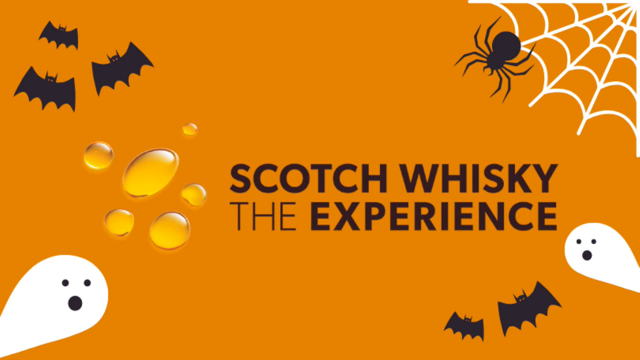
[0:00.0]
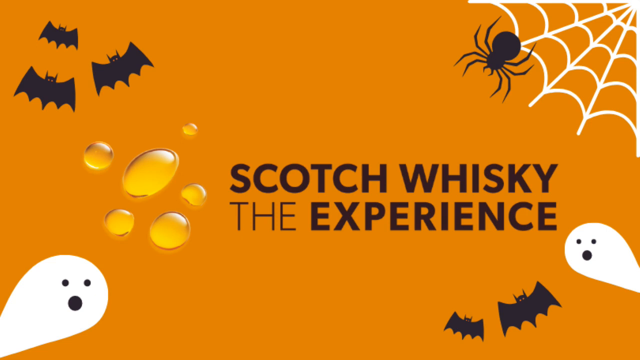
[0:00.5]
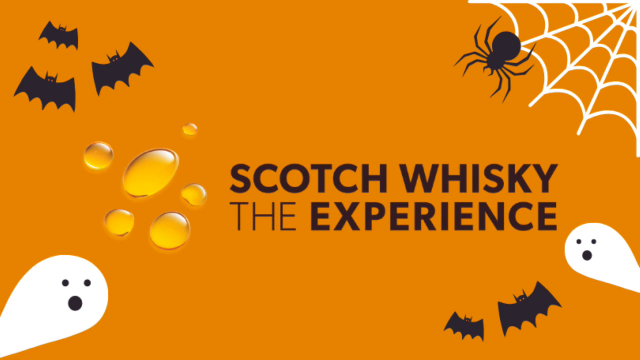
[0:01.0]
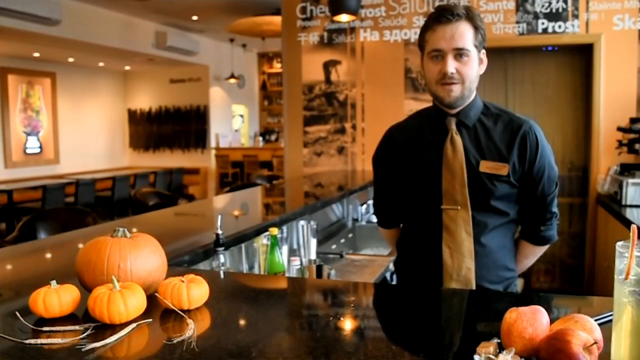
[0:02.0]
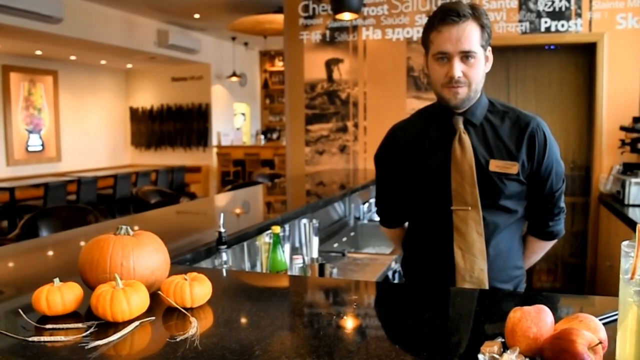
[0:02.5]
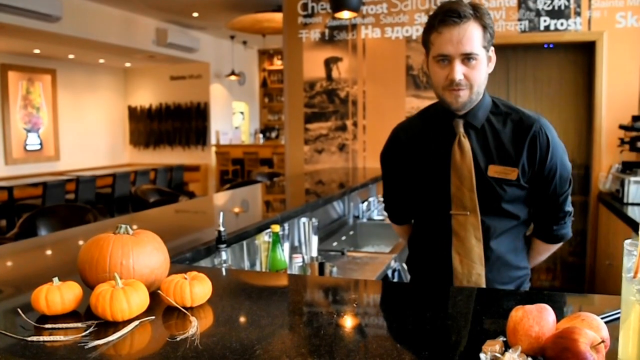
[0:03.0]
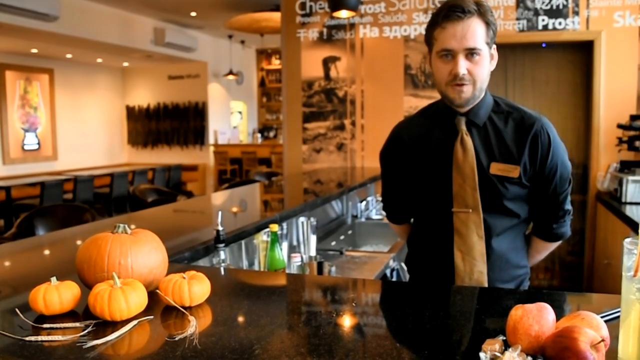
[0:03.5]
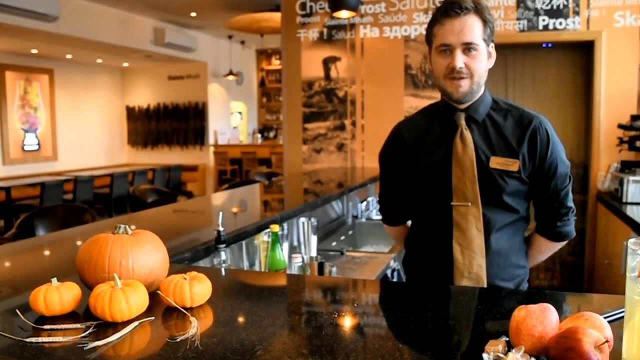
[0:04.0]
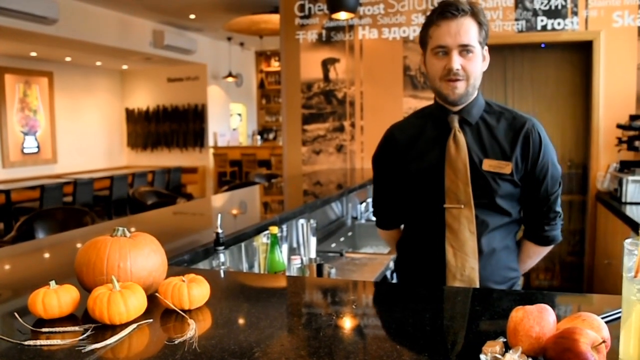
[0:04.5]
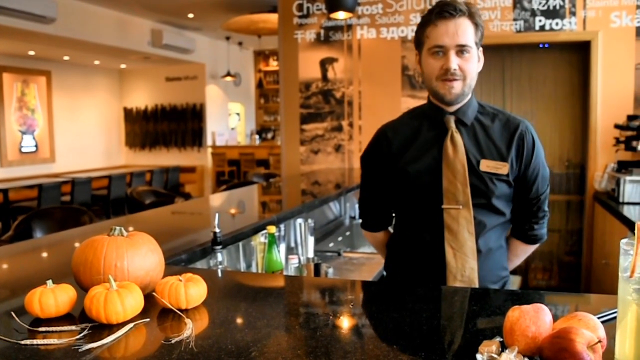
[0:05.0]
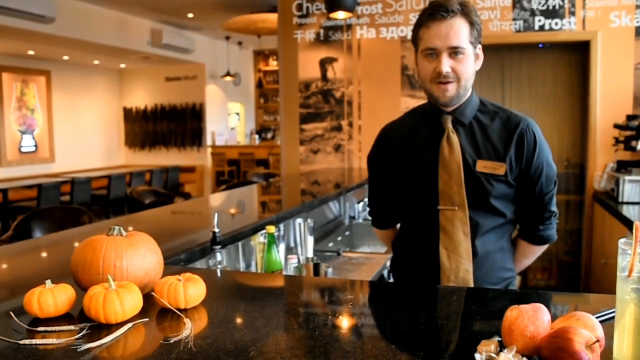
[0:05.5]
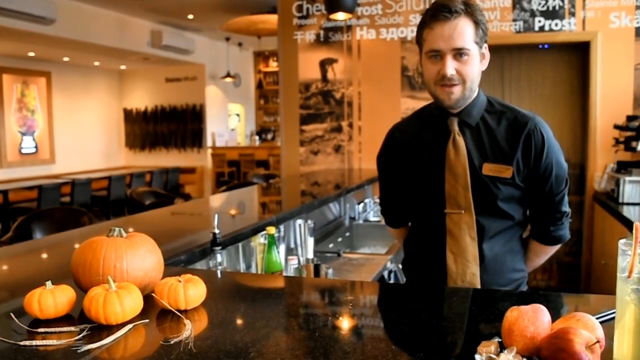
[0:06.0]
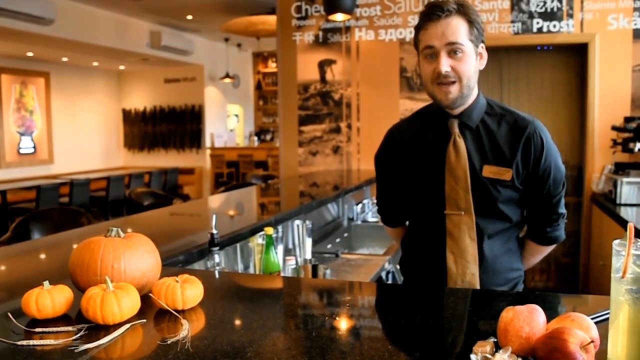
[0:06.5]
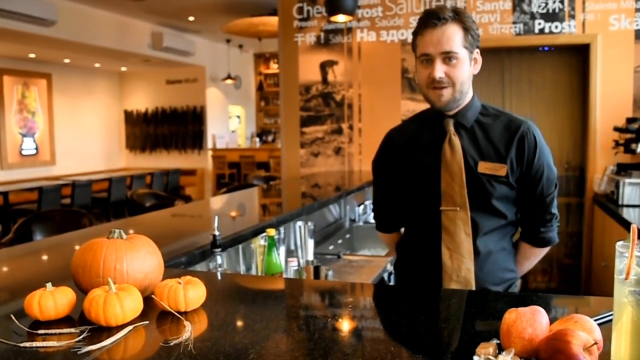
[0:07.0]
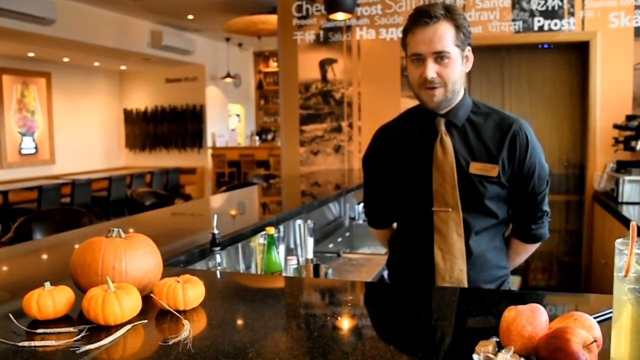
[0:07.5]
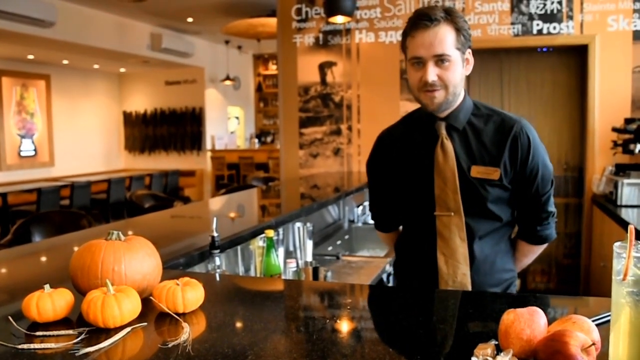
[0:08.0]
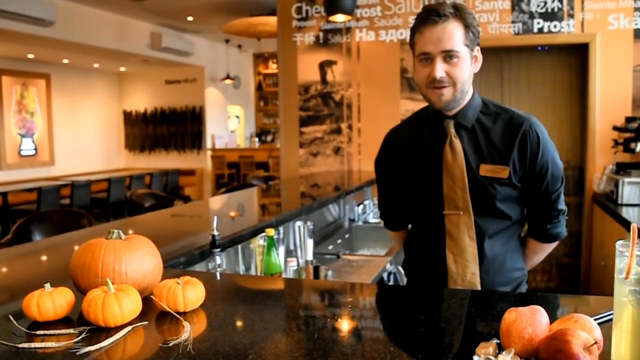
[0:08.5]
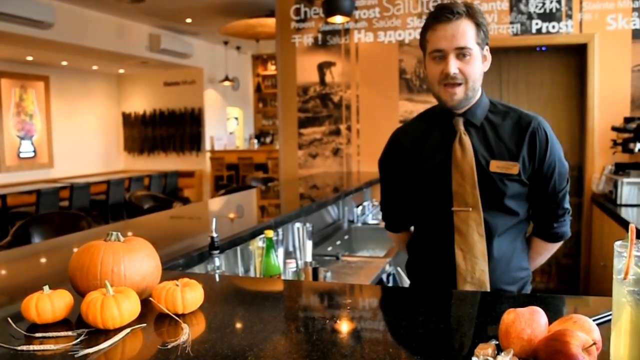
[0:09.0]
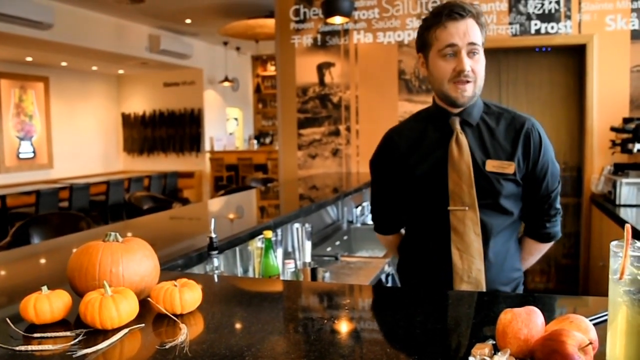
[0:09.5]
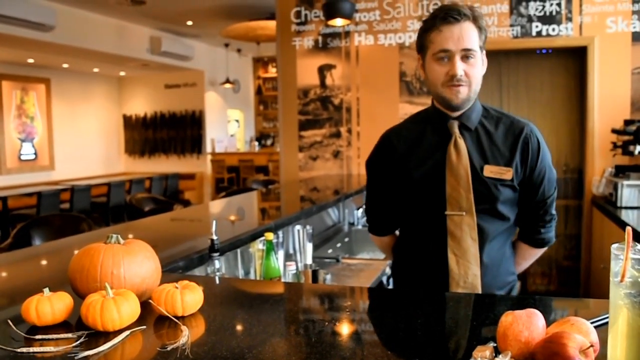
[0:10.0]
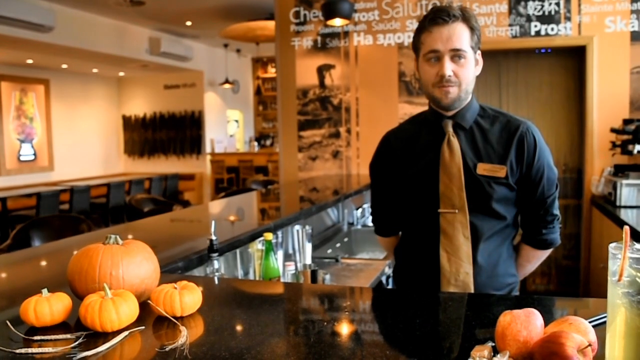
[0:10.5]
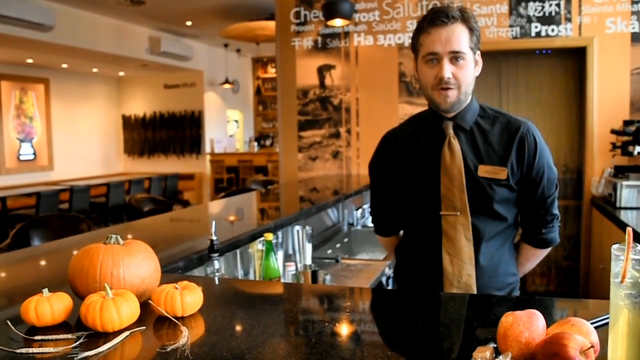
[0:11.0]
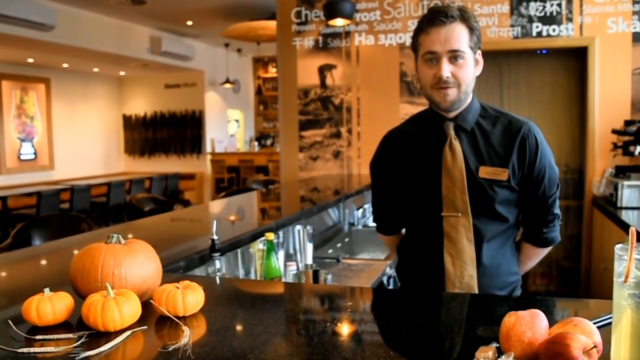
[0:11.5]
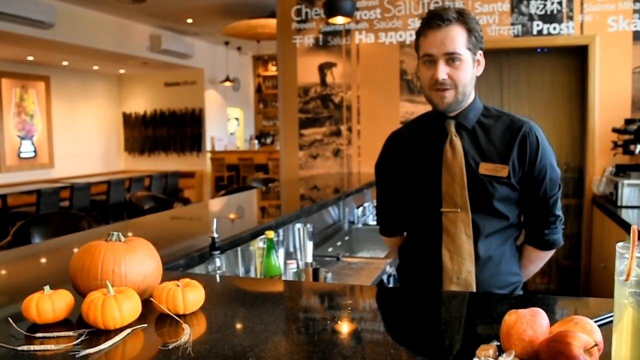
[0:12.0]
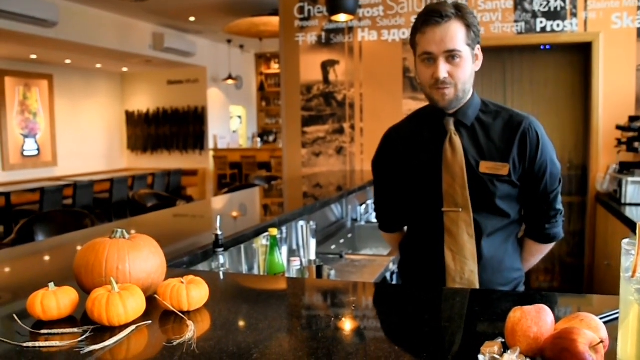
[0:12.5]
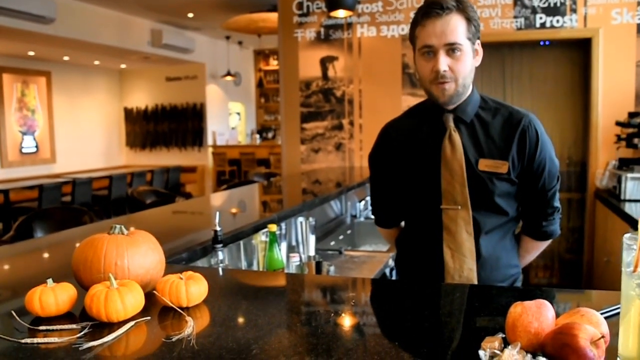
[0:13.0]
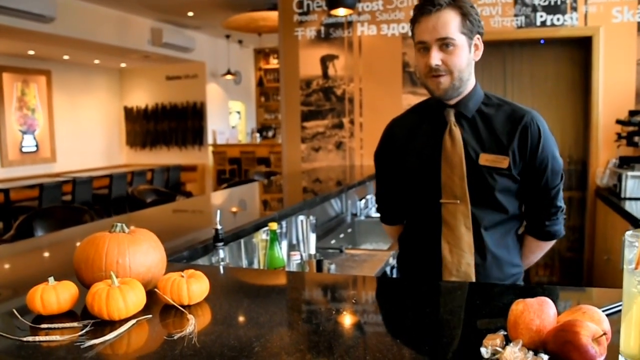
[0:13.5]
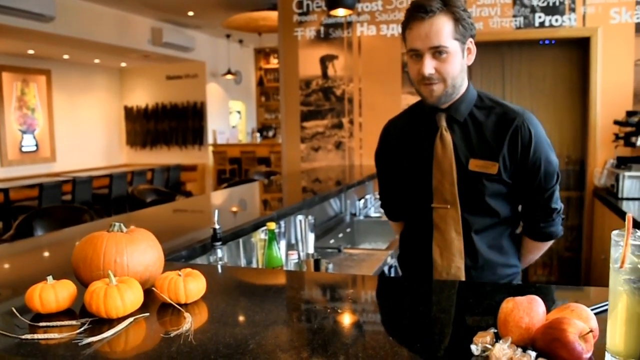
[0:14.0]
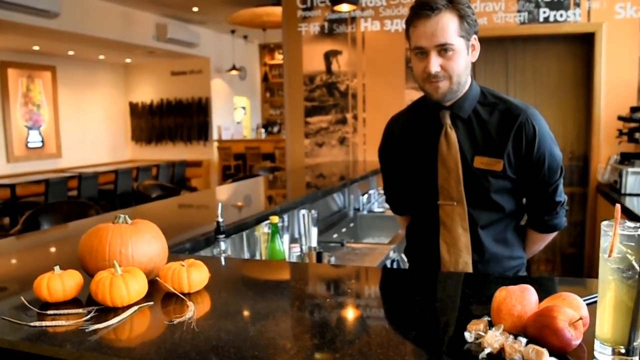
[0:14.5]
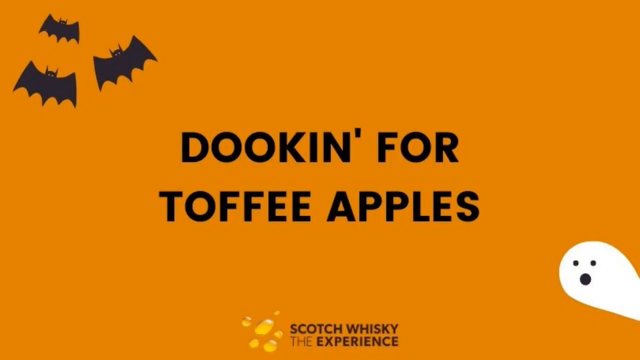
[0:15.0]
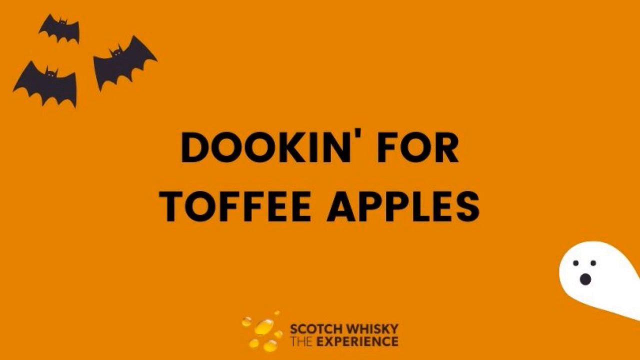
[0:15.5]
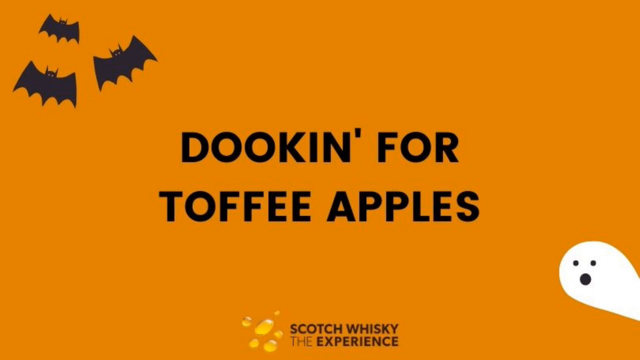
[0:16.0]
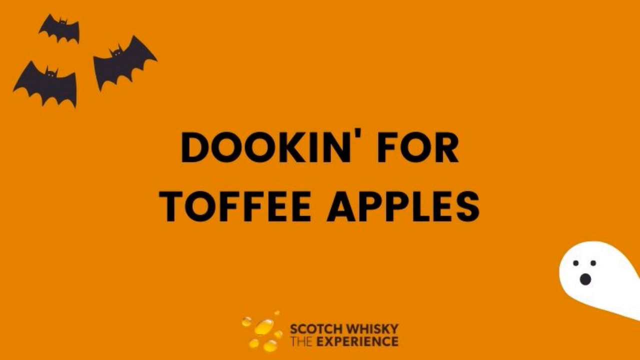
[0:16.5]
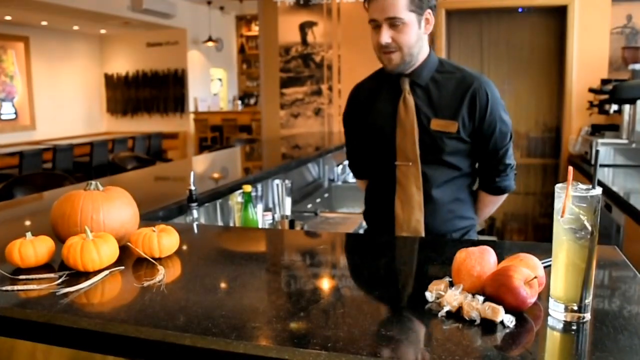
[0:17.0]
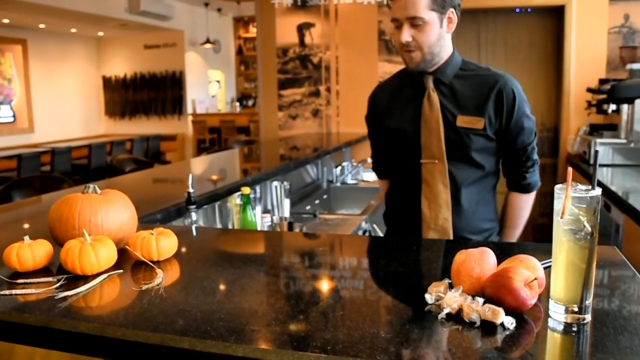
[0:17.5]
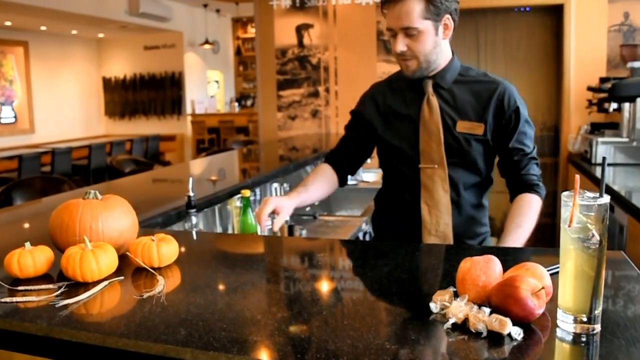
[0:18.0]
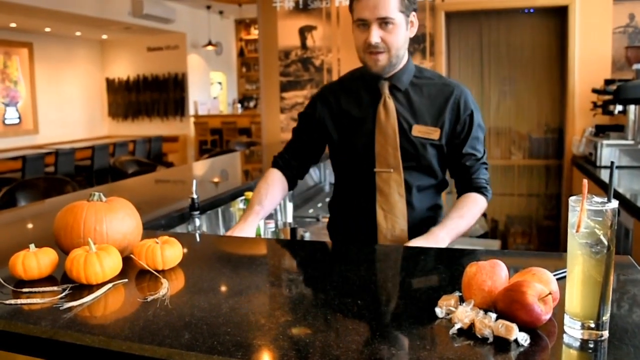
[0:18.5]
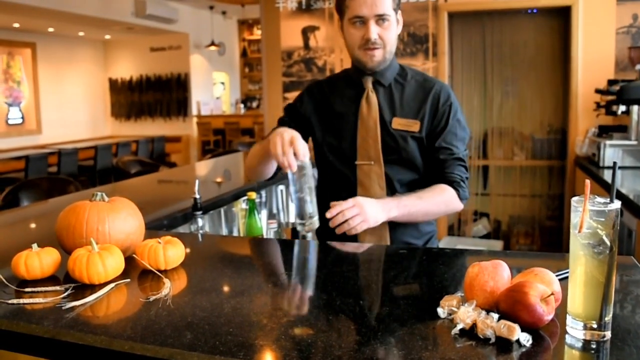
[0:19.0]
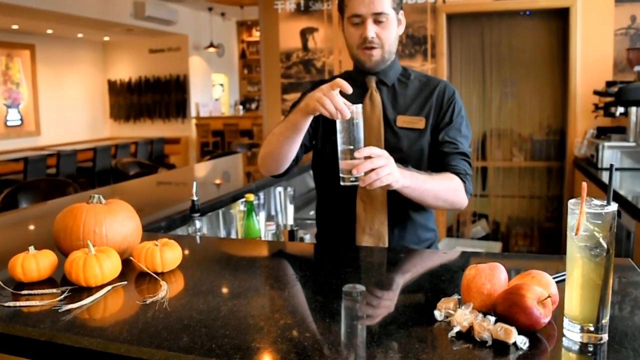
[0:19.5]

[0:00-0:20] The video opens on an orange background with black bold lettering in the middle reading "scotch whiskey" and, underneath that, "the experience". A spider web and a spider are in the top right, a ghost and bats in the bottom right, a ghost in the bottom left, and three bats in the top left, giving a Halloween theme. A man in his mid-30s with dark hair and a light mustache and beard then appears at a bar, wearing an orange tie and a black shirt. Three little pumpkins and one big pumpkin are in front of him. His hands are behind his back, and he wears a name tag that cannot be read. No customers are visible in the bar. The same orange background then returns with the text "Dookin for toffee apples".